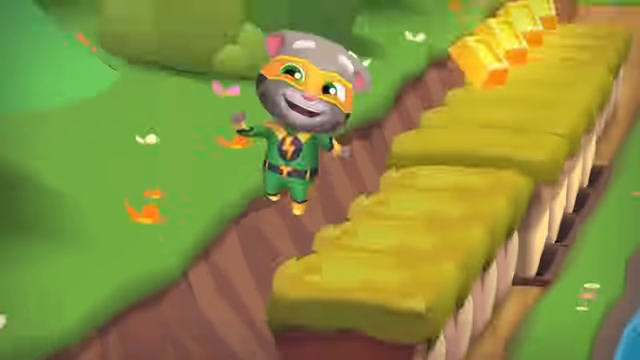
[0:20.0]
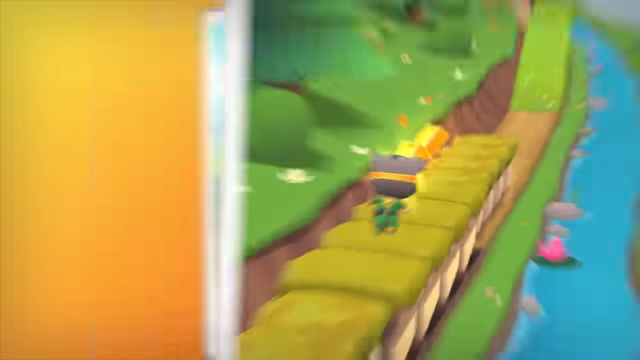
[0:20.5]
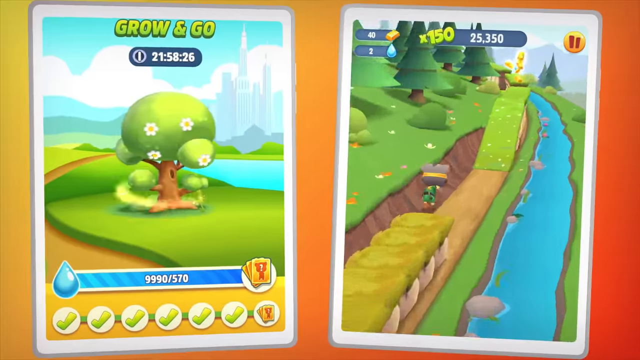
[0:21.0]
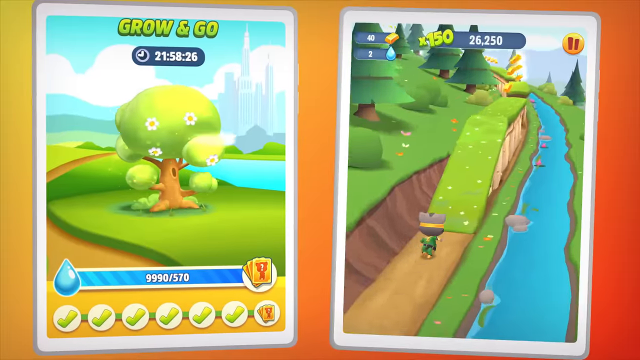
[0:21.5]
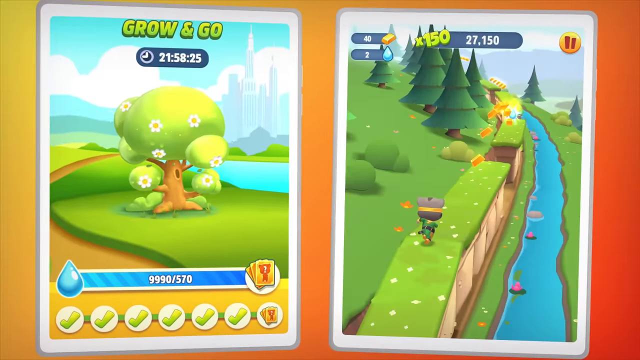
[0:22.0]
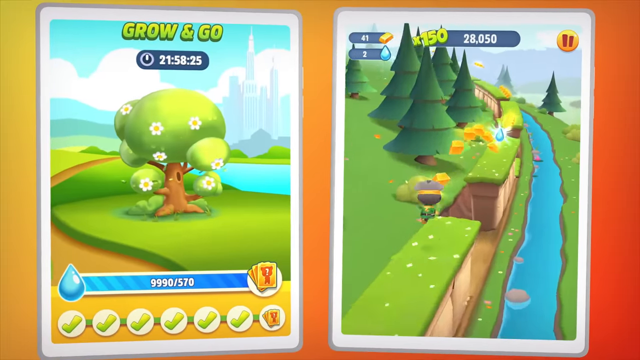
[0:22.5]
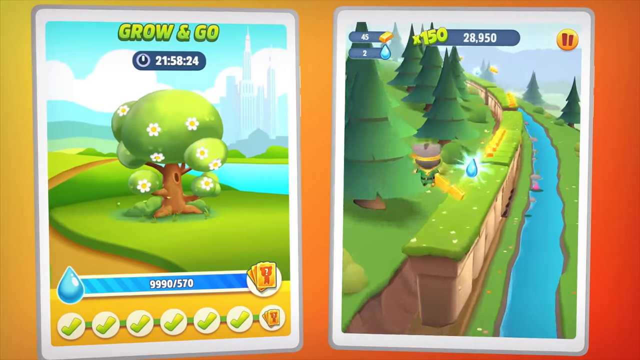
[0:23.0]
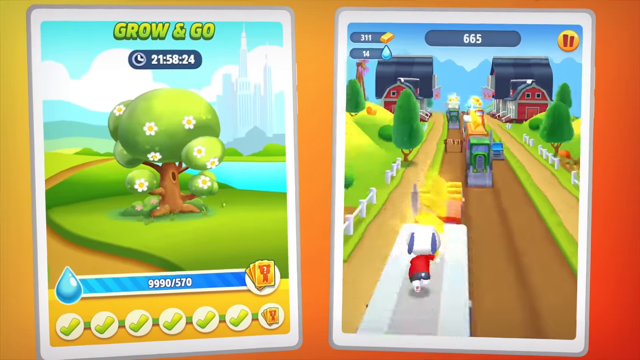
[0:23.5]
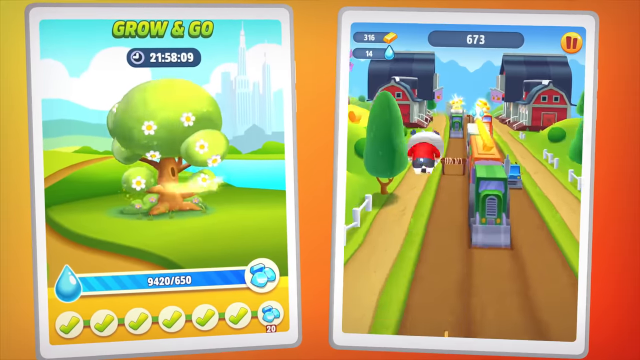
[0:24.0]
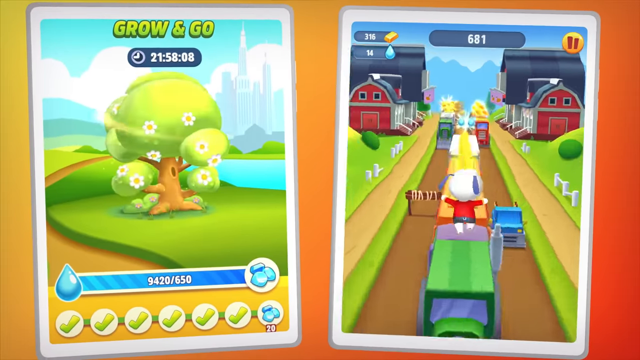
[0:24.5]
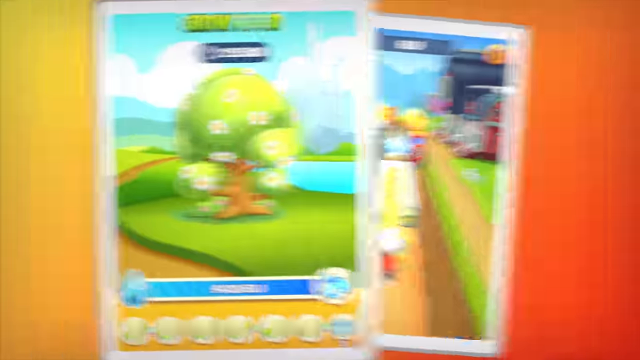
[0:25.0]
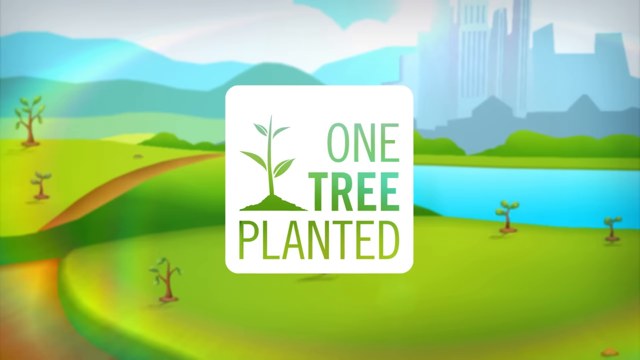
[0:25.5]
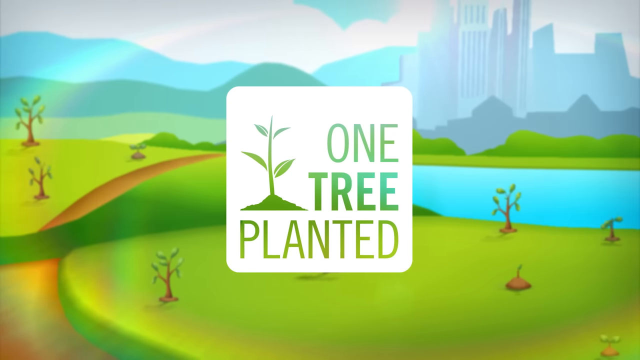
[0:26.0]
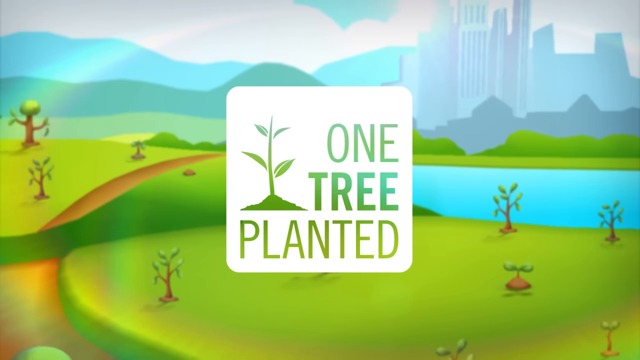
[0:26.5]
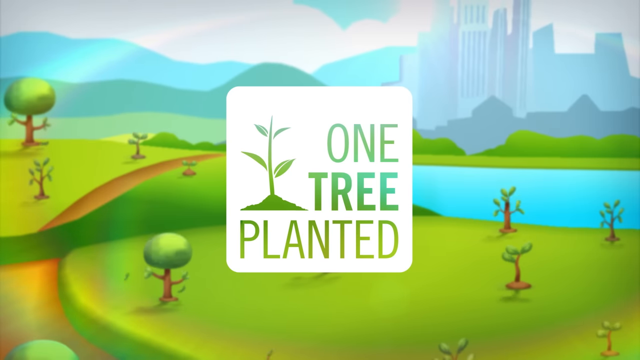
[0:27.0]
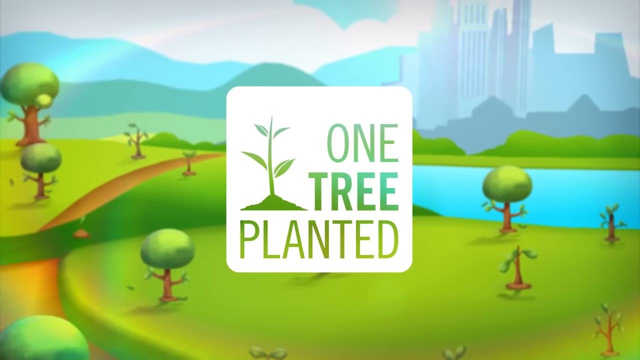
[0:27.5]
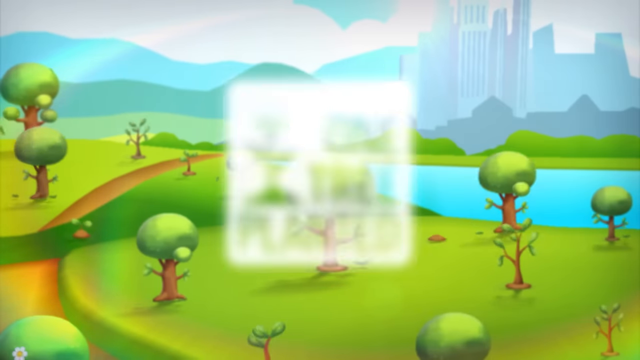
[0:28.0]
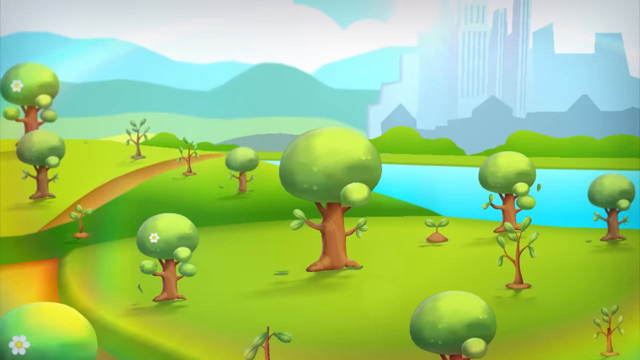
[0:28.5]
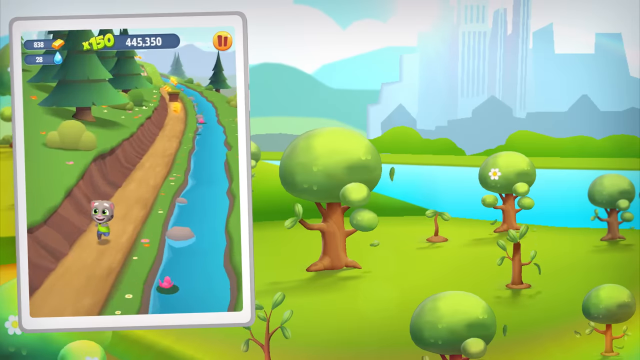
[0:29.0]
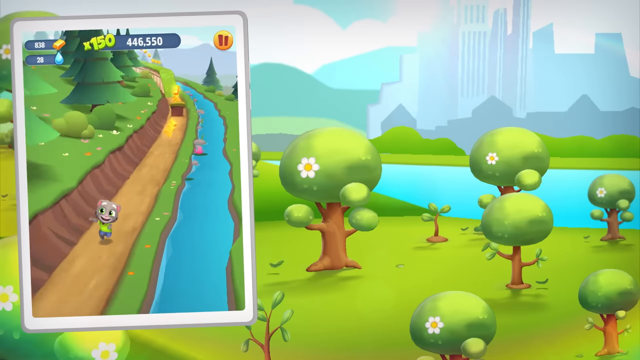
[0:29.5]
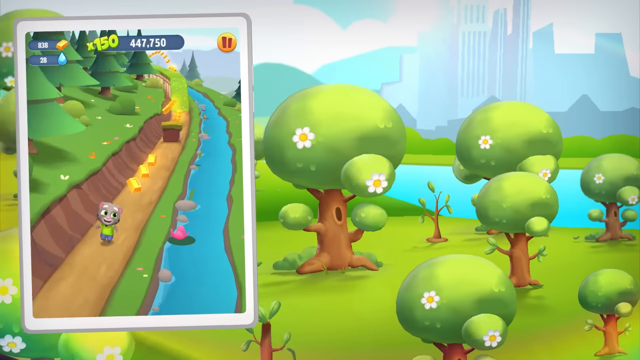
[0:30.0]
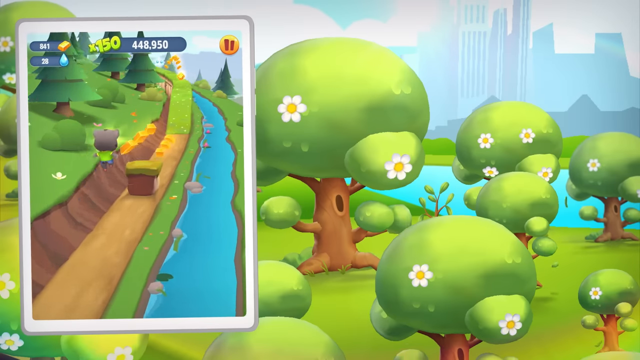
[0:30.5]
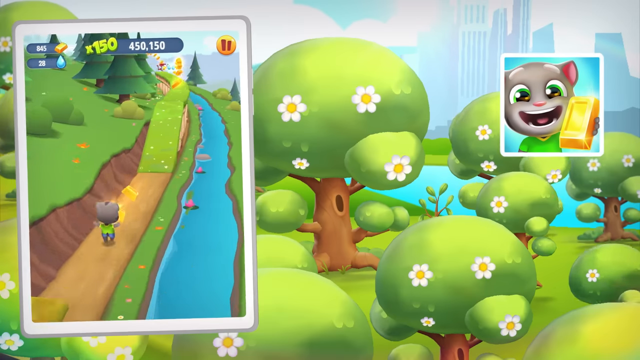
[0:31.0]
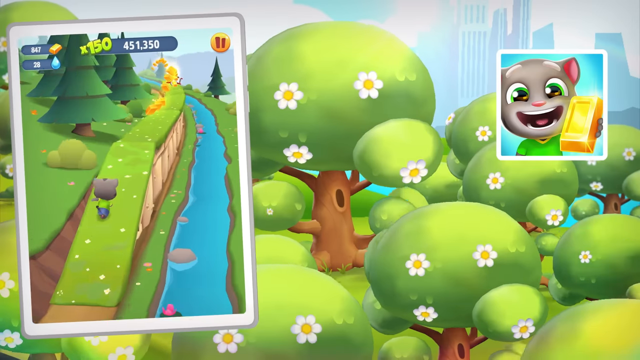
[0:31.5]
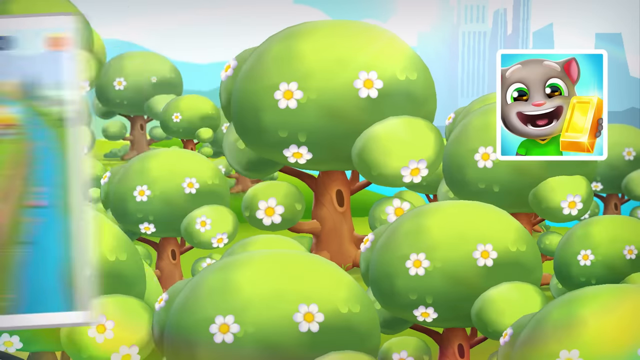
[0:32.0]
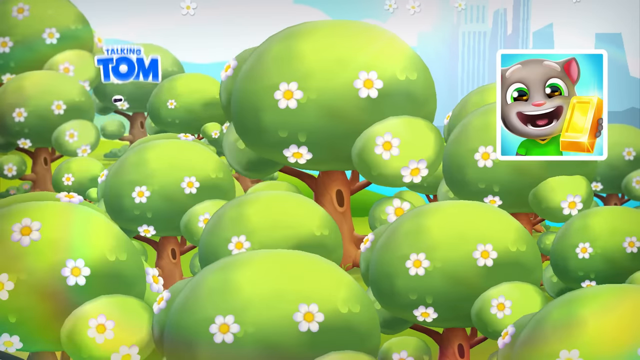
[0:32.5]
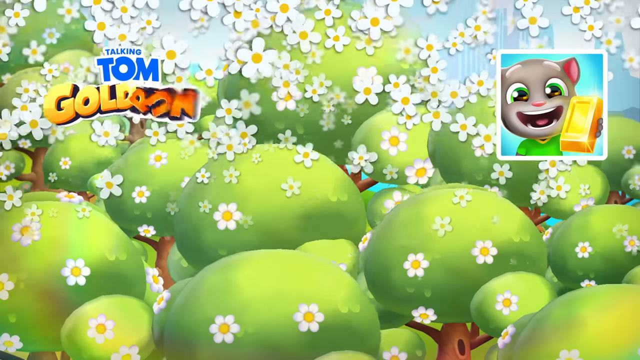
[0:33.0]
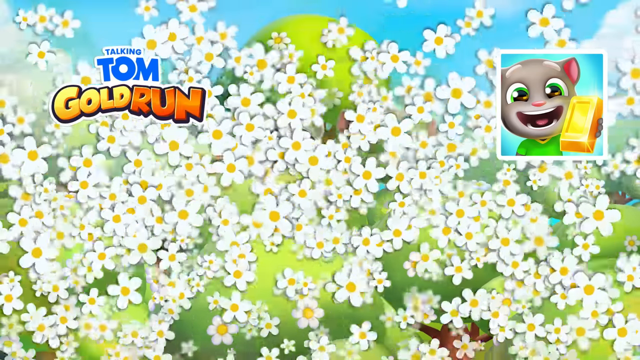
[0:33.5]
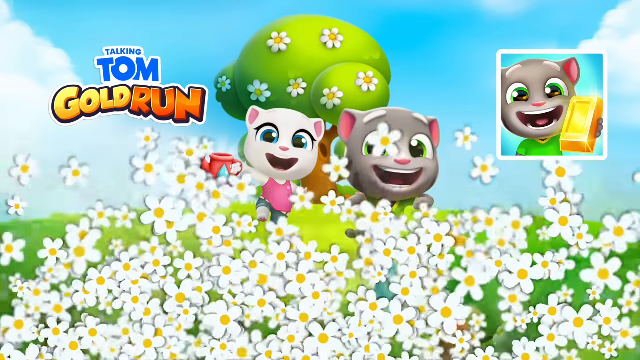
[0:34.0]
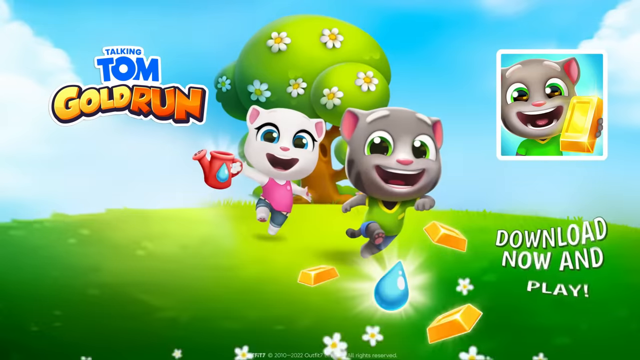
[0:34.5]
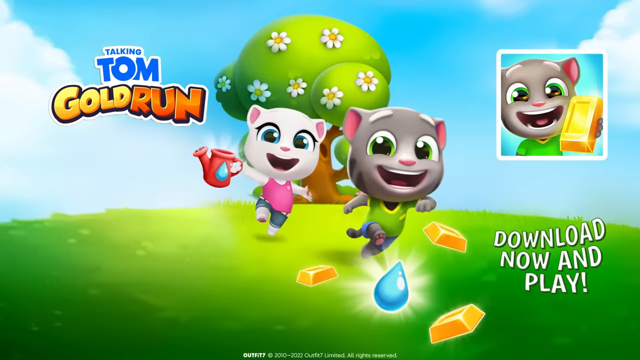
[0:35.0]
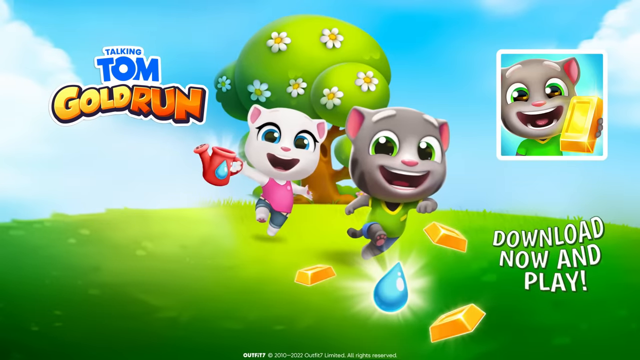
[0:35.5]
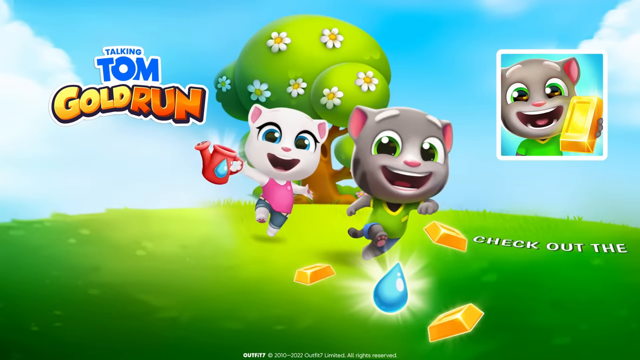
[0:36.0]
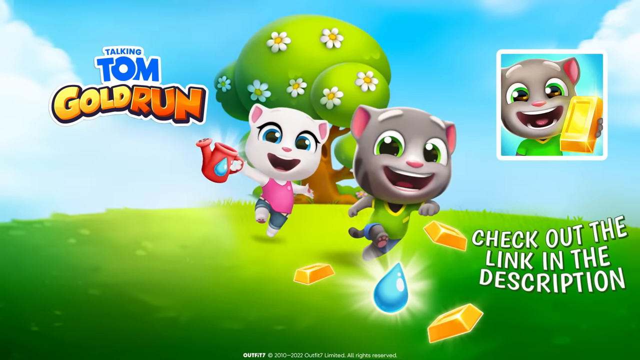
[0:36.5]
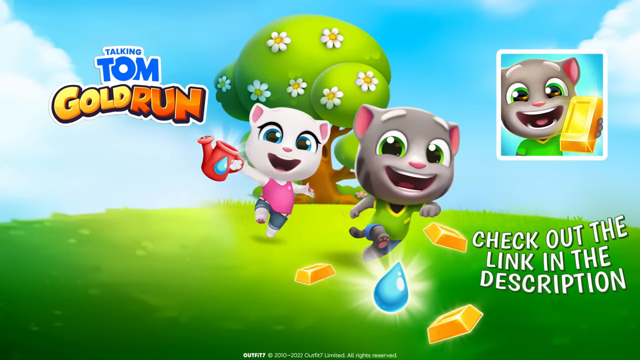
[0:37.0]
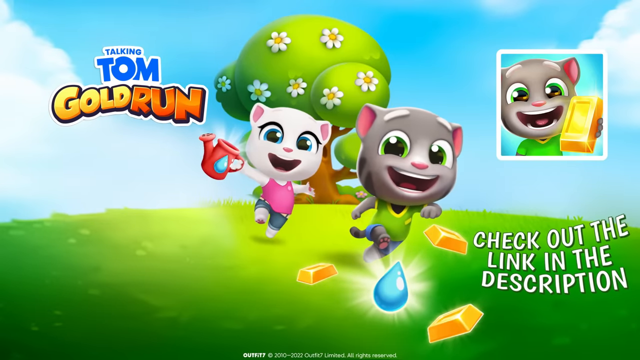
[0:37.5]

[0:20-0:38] Another side-by-side of gameplay shows the grey cat running on what look like grassy bridges, jumping and running to collect gold bars. The view transitions to the white dog again, leaping onto vehicles and collecting gold bars. Next comes a screen with a logo that says "One Tree Planted", possibly related to planting trees. More gameplay appears on the left side with the grey cat, while trees seem to grow larger in the background. A transition follows with lots of falling daisies, the Talking Tom Gold Run logo on the left side, and a picture of the grey cat smiling and holding a gold bar on the right. The video ends with the grey cat and the white cat running in a grassy field with a few gold bars and a single raindrop or drop of water; the white cat holds a red pitcher, like one for watering plants. Text in the bottom right says "check out the link in the description". In this final frame the two characters look like they are running but are not actually in motion, seemingly frozen in place while slowly tilting to one side. Behind them are one large tree and a blue sky, giving a daytime scene.